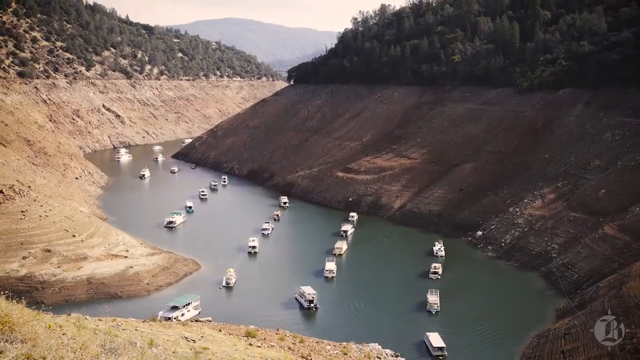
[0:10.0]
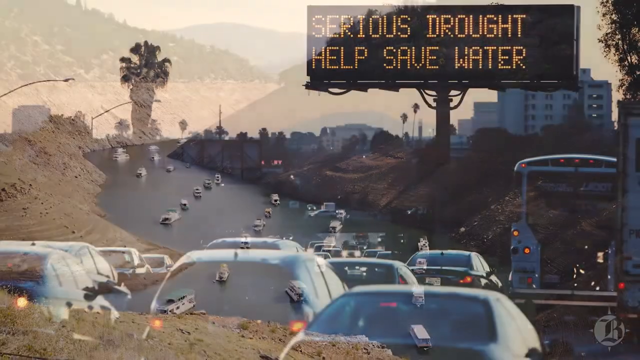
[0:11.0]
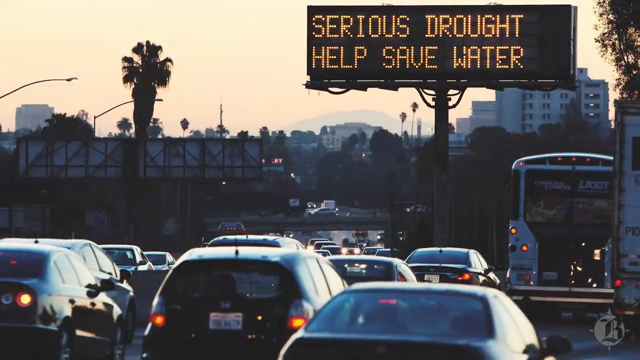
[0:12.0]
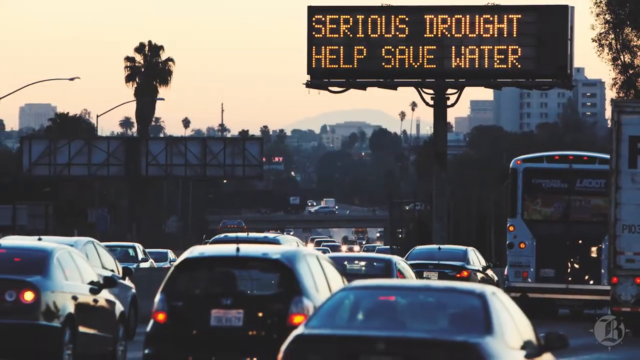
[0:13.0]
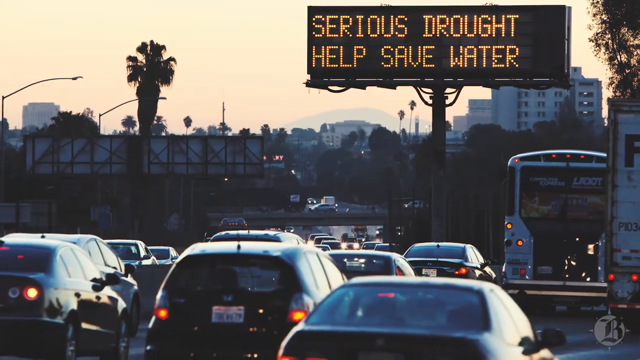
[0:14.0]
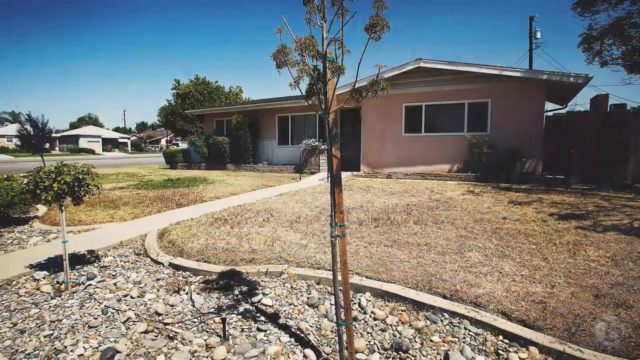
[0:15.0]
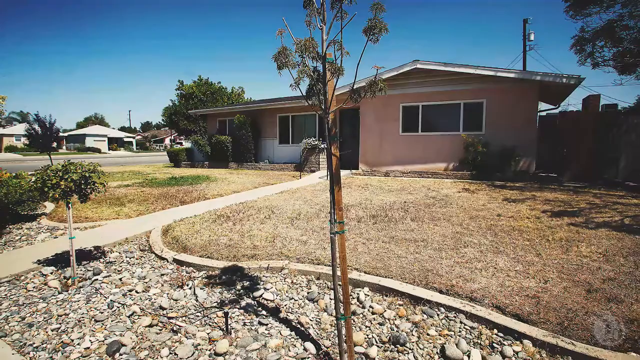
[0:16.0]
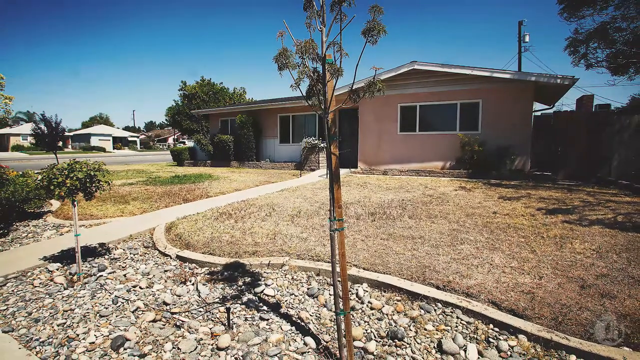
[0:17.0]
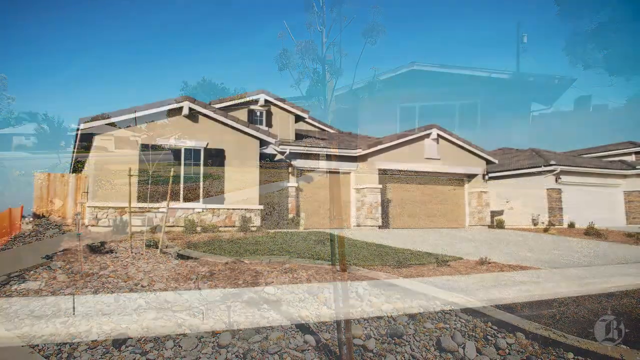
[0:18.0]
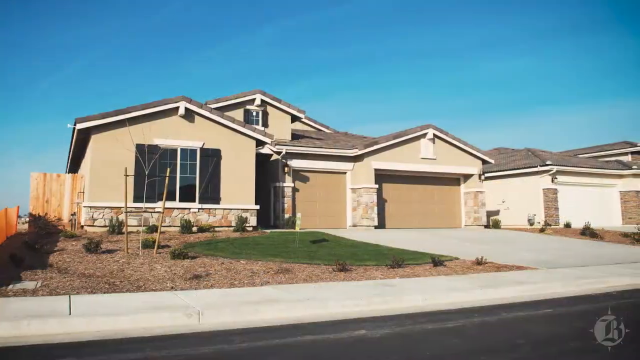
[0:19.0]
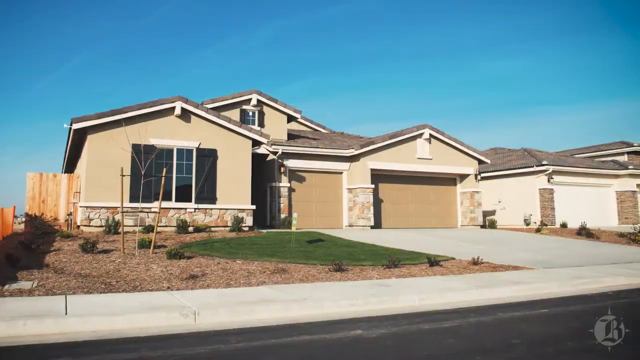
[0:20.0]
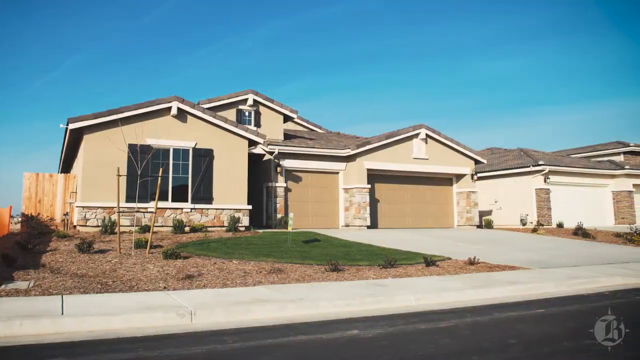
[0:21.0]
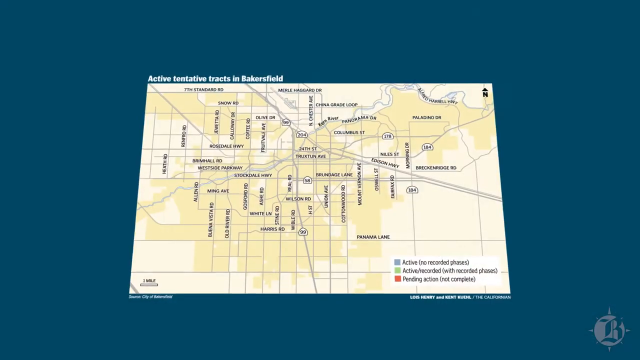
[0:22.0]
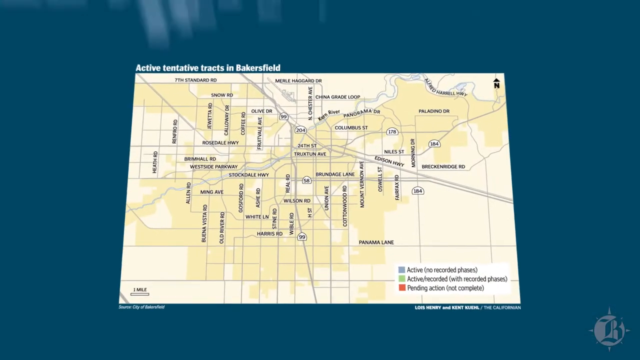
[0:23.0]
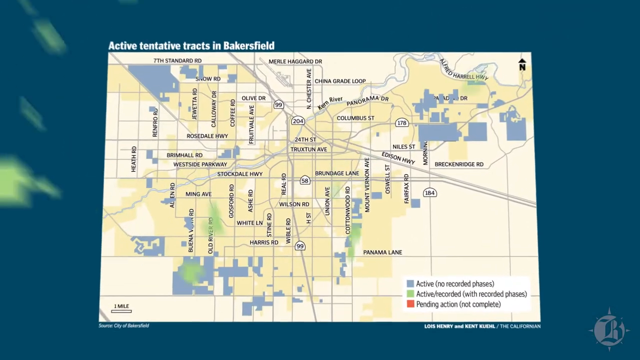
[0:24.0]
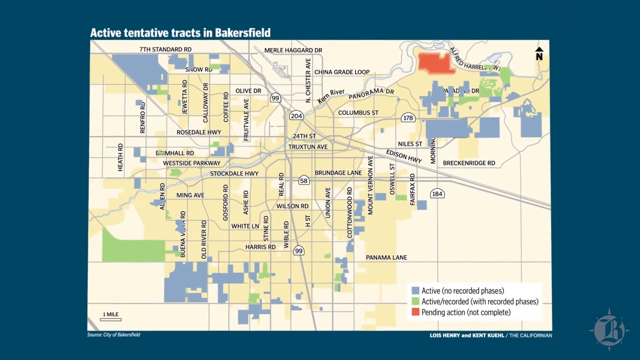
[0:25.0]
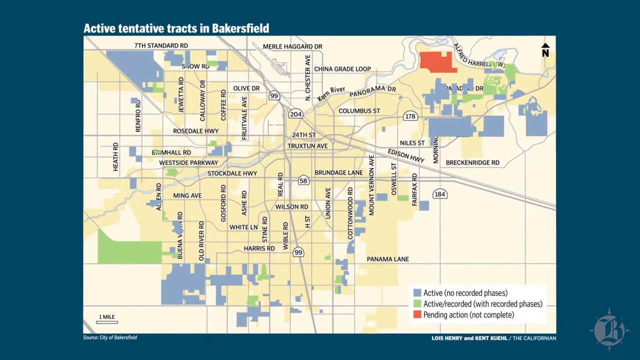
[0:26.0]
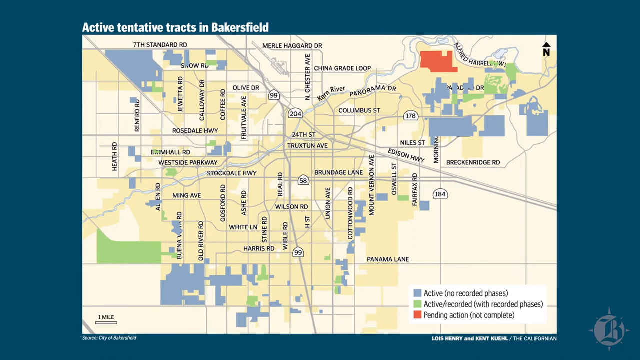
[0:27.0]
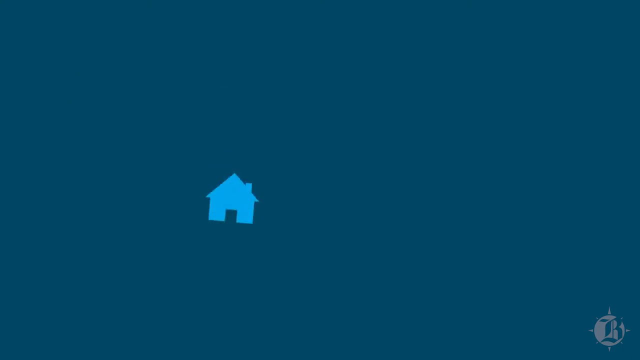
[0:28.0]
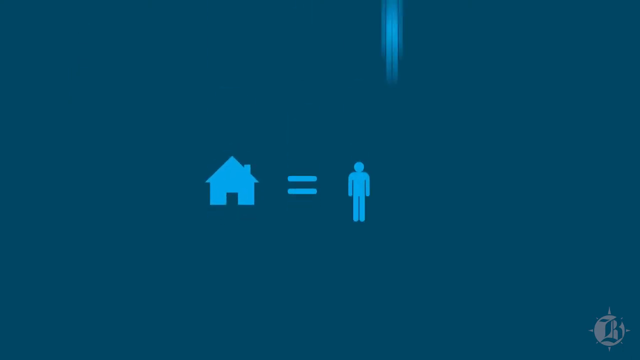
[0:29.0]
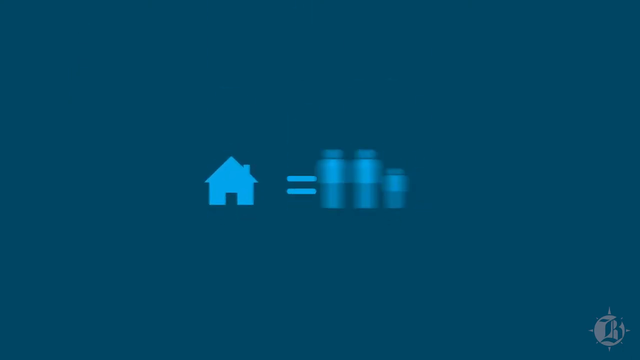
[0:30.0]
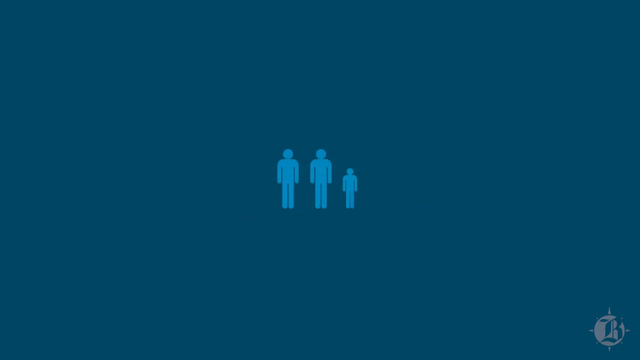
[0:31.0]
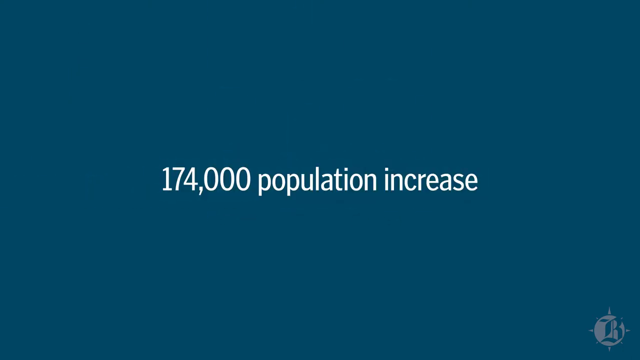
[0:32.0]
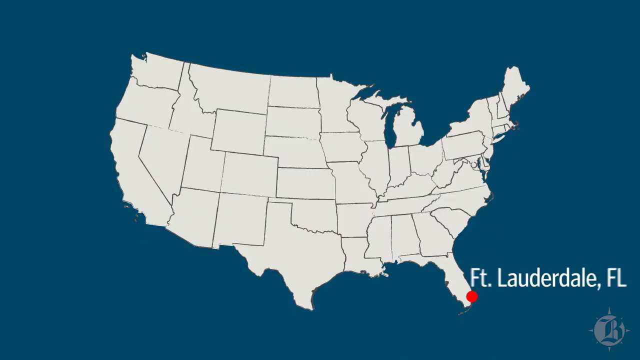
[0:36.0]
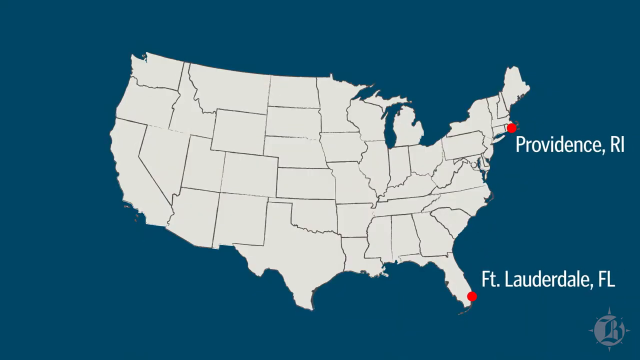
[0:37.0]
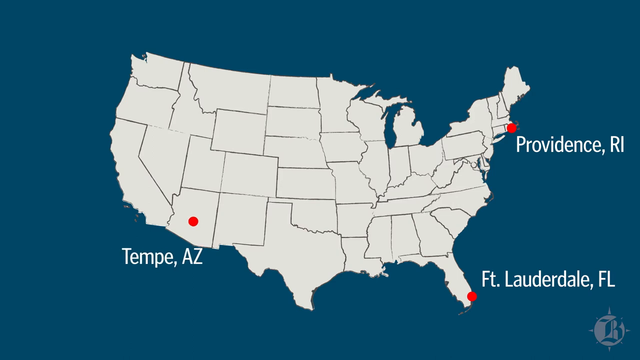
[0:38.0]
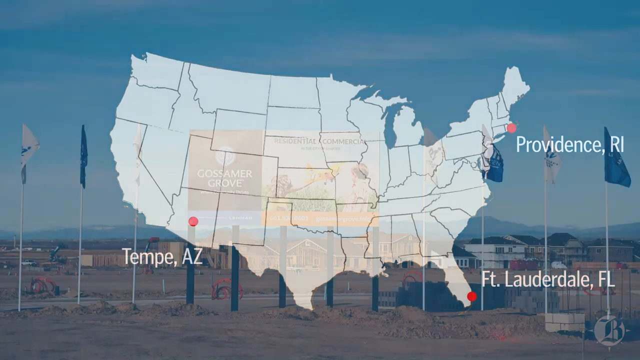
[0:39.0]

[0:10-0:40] The boats are parked front to back and side to side. Most of them are white, and there are several different types, including sailing boats and motor boats; a few are not perfectly aligned. The video moves to a busy freeway with palm trees. It appears to be around dusk, as it is a little darker. A large digital traffic sign reads "serious drought, help save water." A bus is on the lower right side, and red taillights are visible. Next is a small one-story pink house, mostly pink, with the bottom half white on the left side. The door is in the middle, and a long walkway has yellow, pretty much dead grass on each side. It is bordered by brick with rocks, and a rock bed in the front has a couple of trees, one held up by a support beam. Then an almost two-story house appears, with a large window in the front and what looks like a three-car garage: a two-door and a separate one-car door, then the driveway, then the front door in the middle. There is a small half-circle patch of grass, with the rest surrounded by red rocks. A small window is in the center at the top. The house is tan, with stone trim along the bottom of the living room window that starts above halfway on the garage side, and a wooden fence runs along the left side. A blue screen then shows a blue clip art image of a house, an equal sign, and two people plus a small person indicating a family. The house and equal sign slide off the screen, the people fade, and white text reads "174,000 population increase." That swipes up, and an image of the United States appears with all the states outlined in white. A red dot appears over Florida with the text "Fort Lauderdale, Florida." Another red dot pops up with "Providence, Rhode Island," and another with "Tempe, Arizona." The video cuts to a new subdivision on a sunny day, the sky light blue with some very faint streaks of cloud. A big sign out front says "residential commercial" and the name "Gossamer Grove," with a picture of two kids in a field, and white and blue flags are on each side. Homes under construction are in the background on a huge plot of land that is mostly dirt, and some completed homes are visible in white with black roofs, and brown as well.